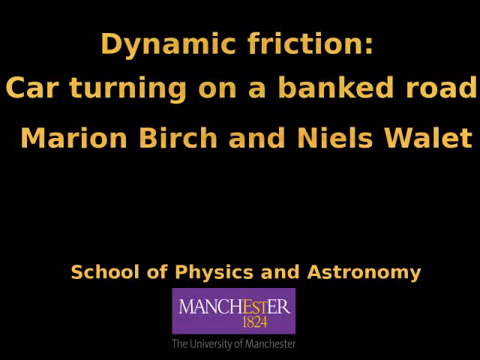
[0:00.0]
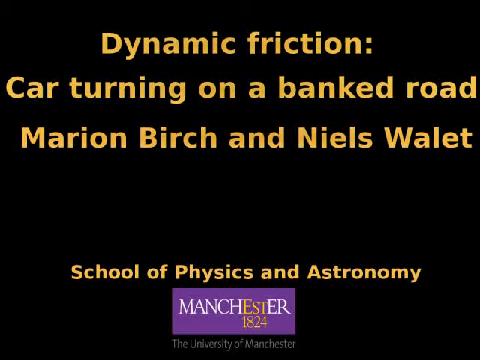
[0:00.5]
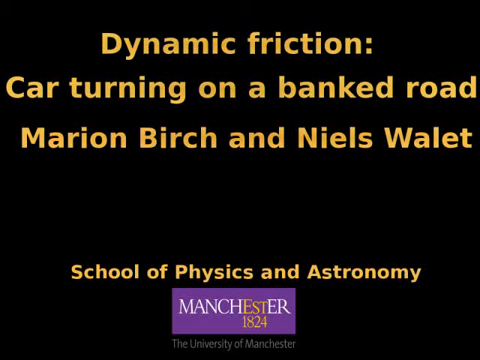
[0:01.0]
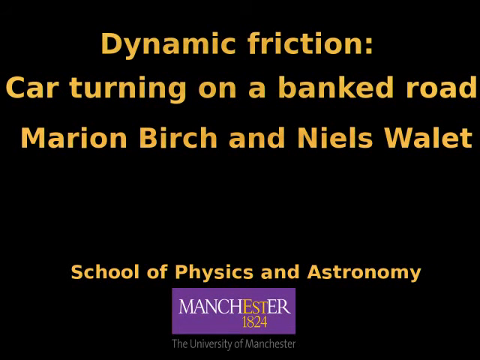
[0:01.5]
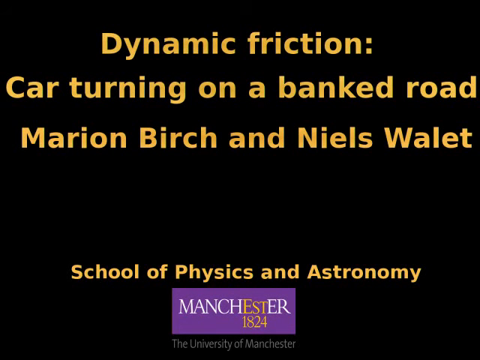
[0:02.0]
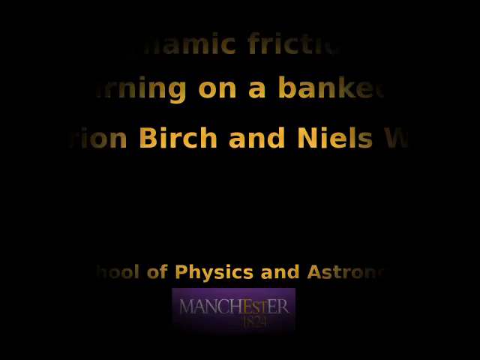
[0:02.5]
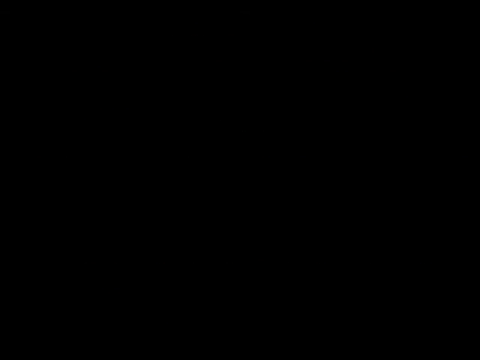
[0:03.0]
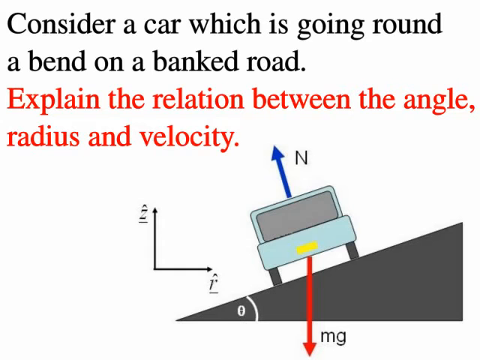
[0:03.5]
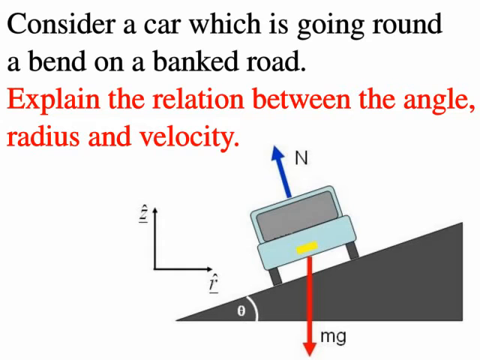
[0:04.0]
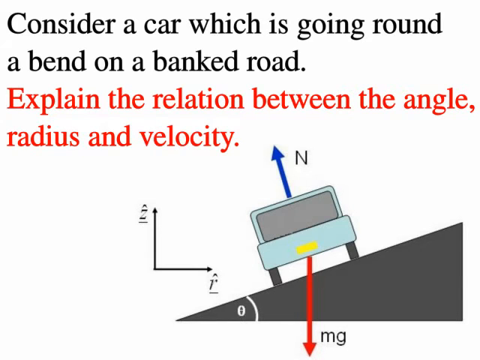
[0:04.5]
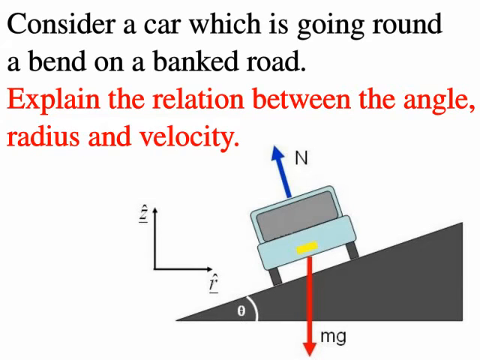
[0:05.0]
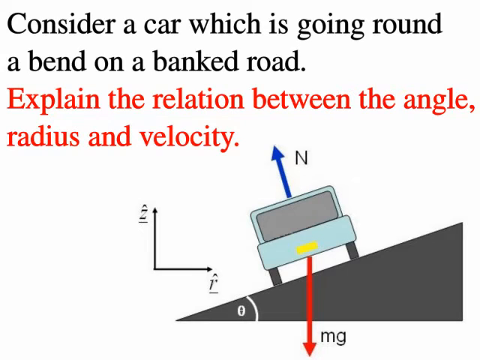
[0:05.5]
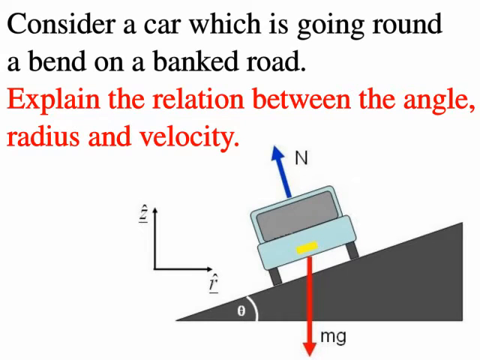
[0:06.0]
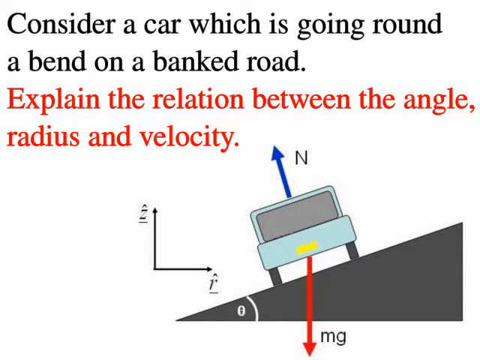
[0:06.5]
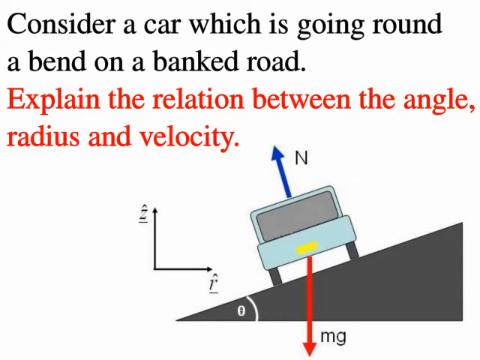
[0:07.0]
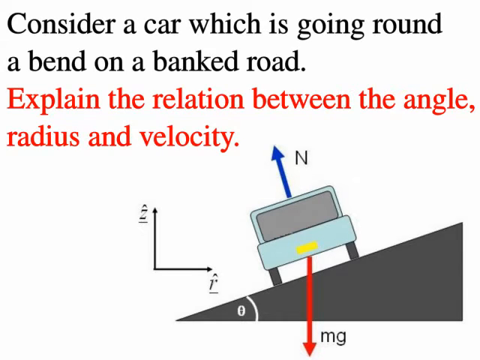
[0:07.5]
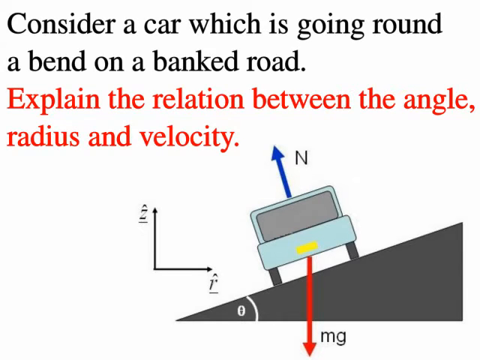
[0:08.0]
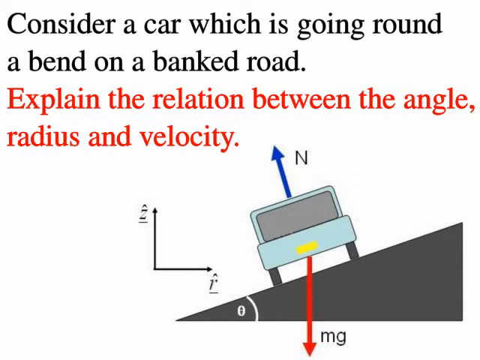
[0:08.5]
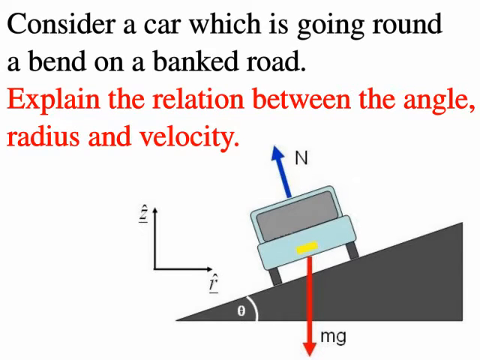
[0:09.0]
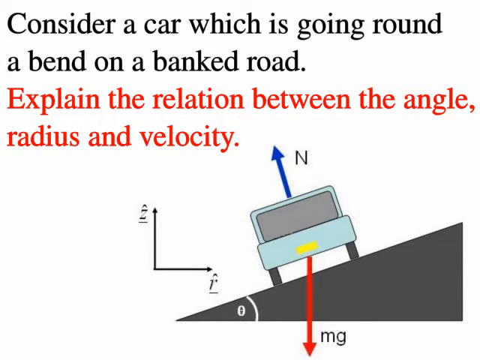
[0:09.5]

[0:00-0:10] A black screen shows yellow text reading "Dynamic friction car turning on a banked road, Marianne Birch and Neal's Wallet, School of Physics and Astronomy, Manchester." The video then transitions to a screen presenting a sort of slope with a car on it and a sort of right-angled triangle representing the slope, with text that says "consider a car which is going round a bend on a banked road. Explain the relation between the angle, radius, and velocity." No people or animals appear.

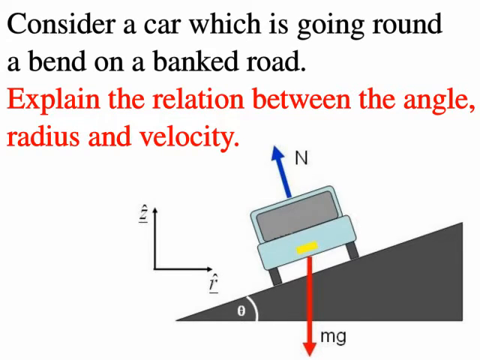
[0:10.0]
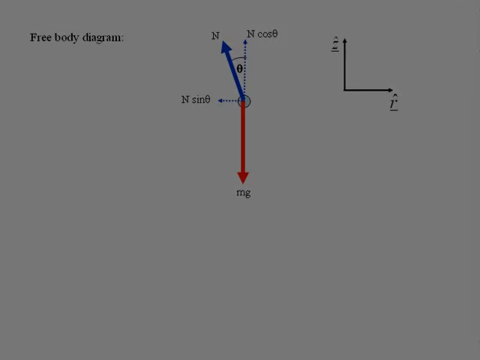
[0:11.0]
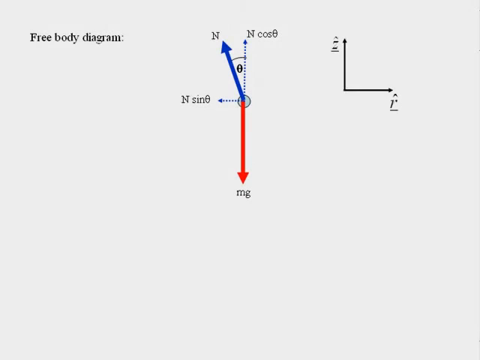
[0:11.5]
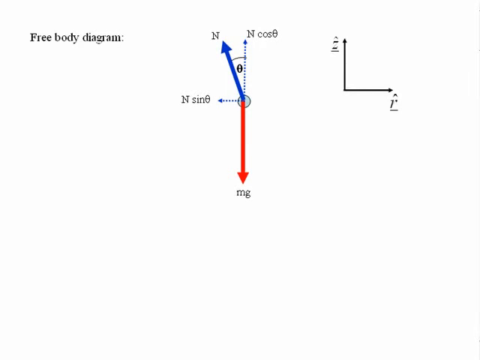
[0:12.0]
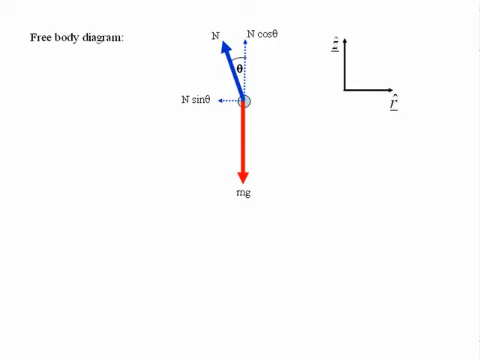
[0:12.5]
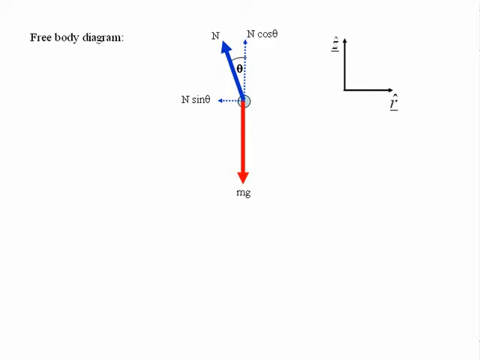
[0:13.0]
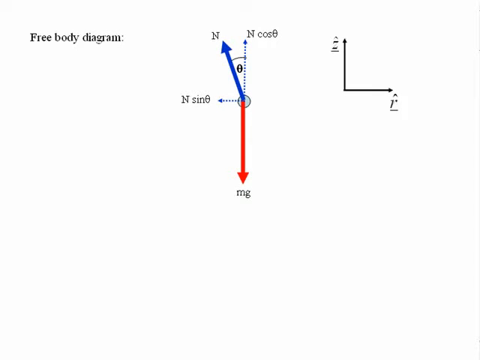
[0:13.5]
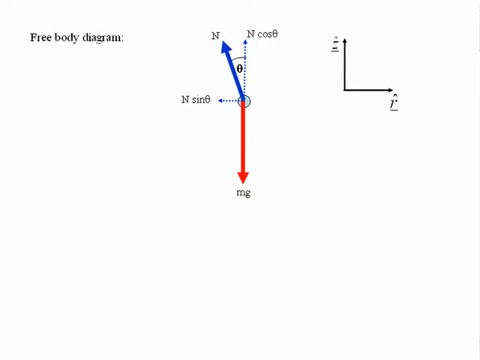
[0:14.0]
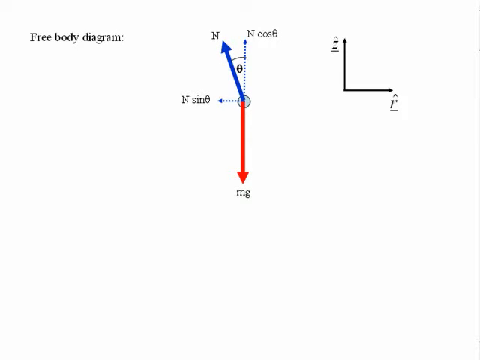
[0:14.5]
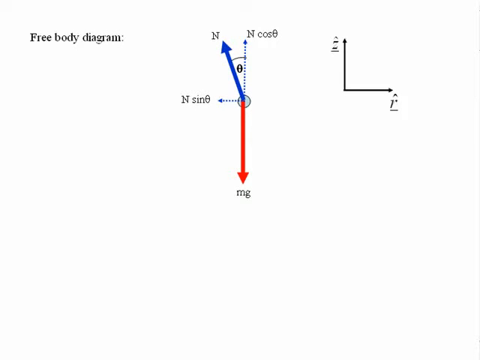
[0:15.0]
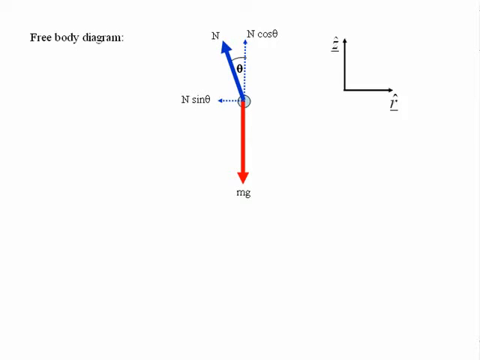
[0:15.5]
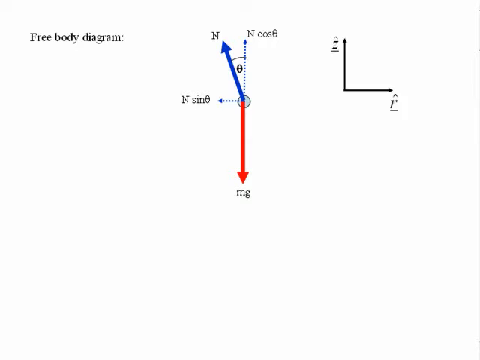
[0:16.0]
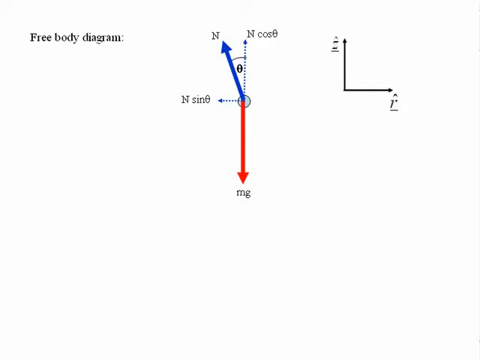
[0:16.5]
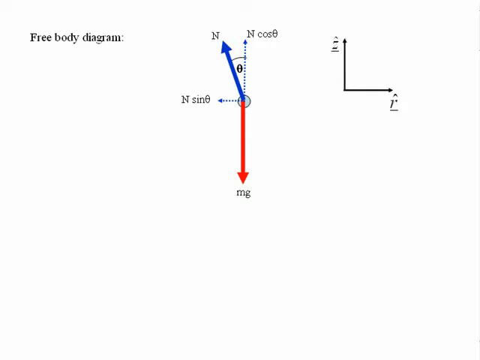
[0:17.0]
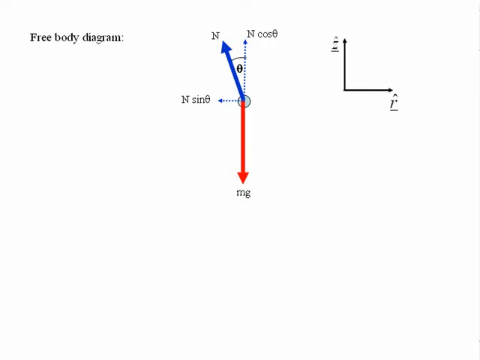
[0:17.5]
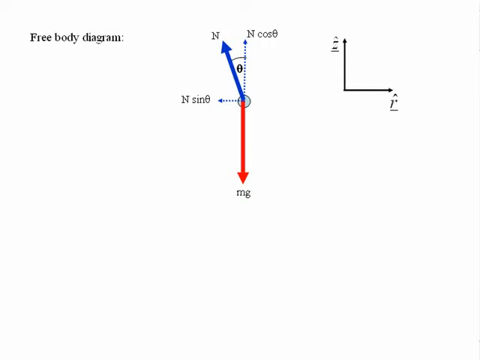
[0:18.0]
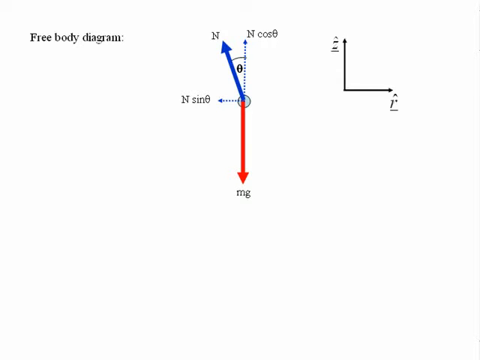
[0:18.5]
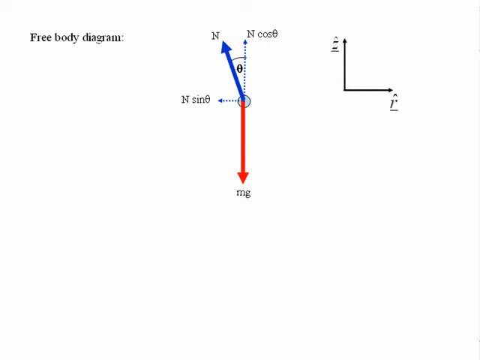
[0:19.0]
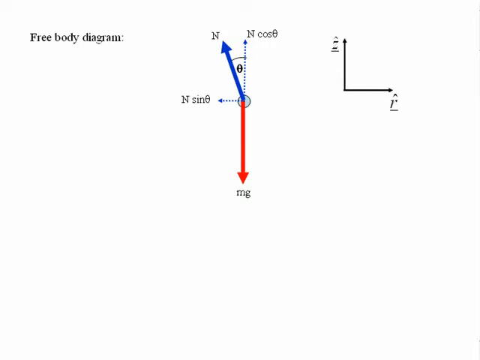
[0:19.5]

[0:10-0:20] Information related to the bar kind of shown on the slope continues, then the video transitions to another light green screen with arrows on it. Text on this page says "free body diagram," and several arrows are shown, some pointing up and down, with cosine associated with an angle and an angle theta marked. No physical subjects are seen.